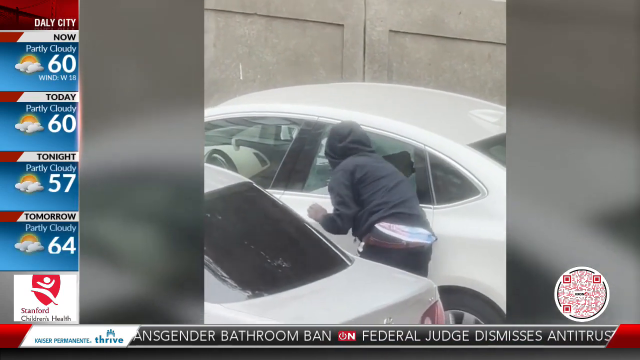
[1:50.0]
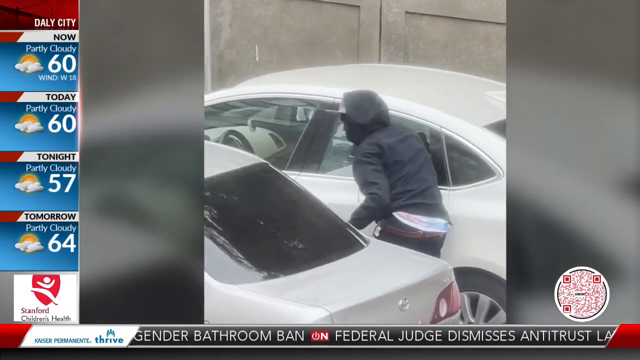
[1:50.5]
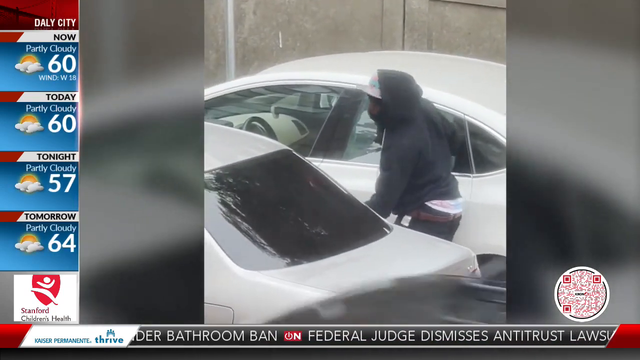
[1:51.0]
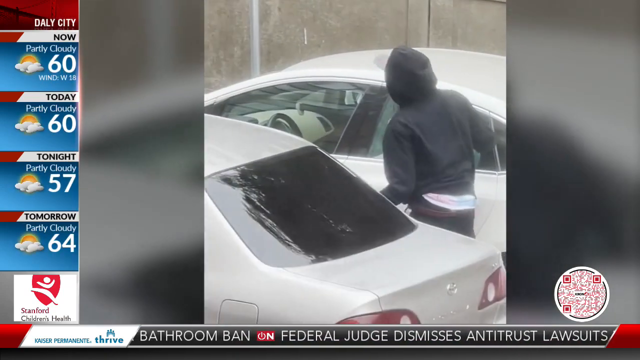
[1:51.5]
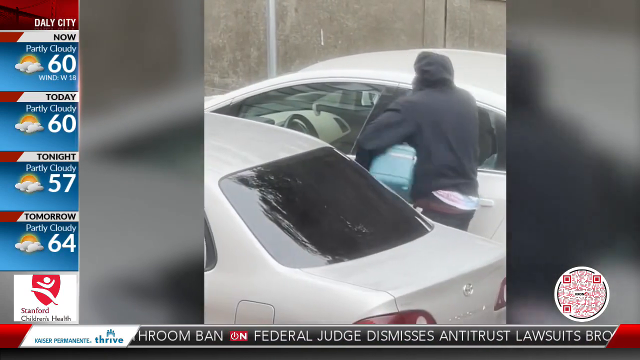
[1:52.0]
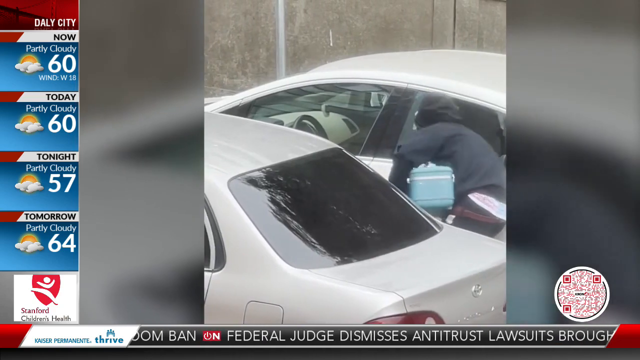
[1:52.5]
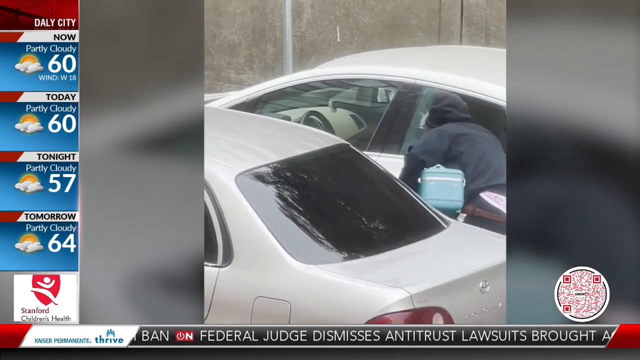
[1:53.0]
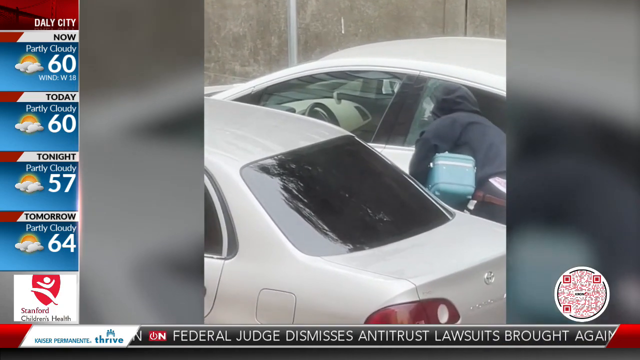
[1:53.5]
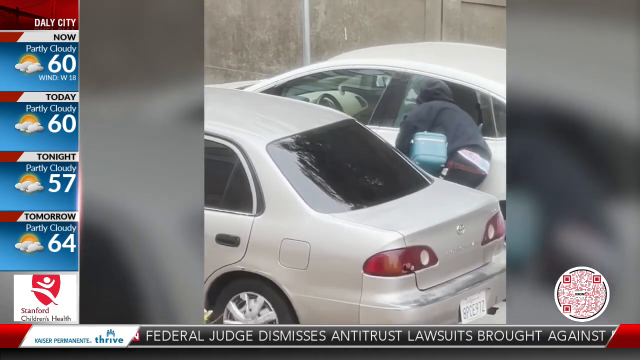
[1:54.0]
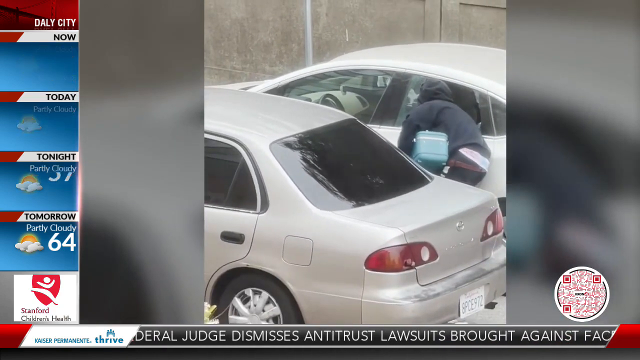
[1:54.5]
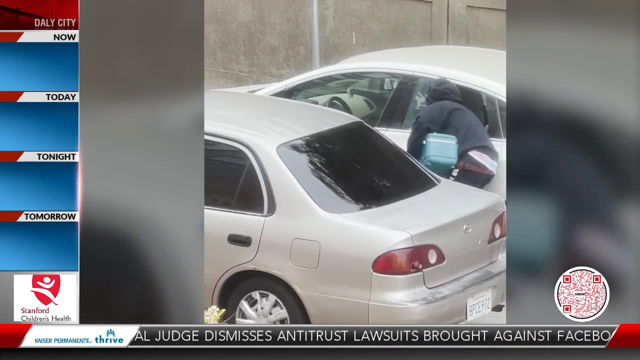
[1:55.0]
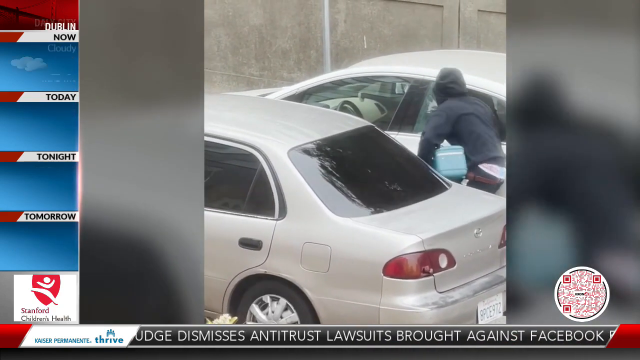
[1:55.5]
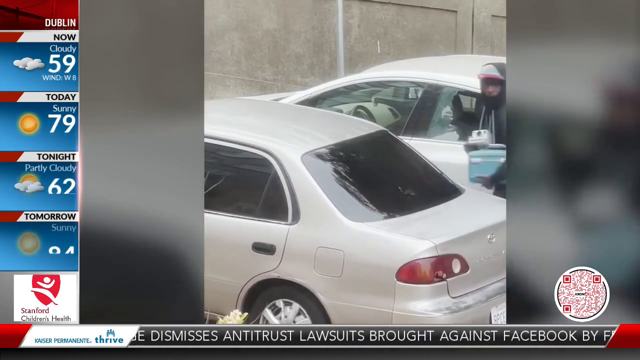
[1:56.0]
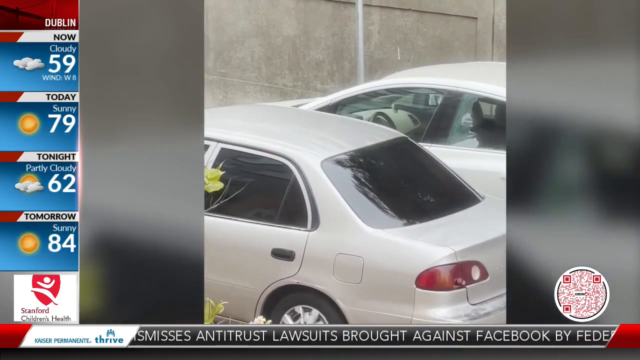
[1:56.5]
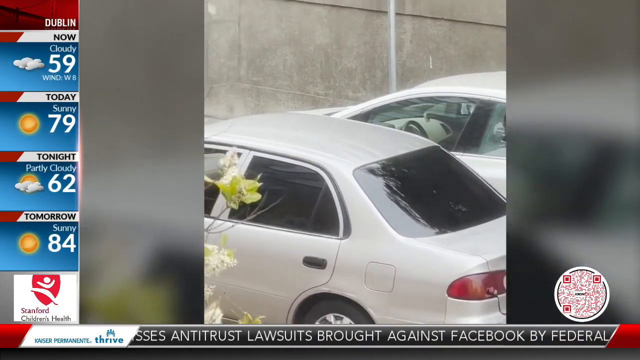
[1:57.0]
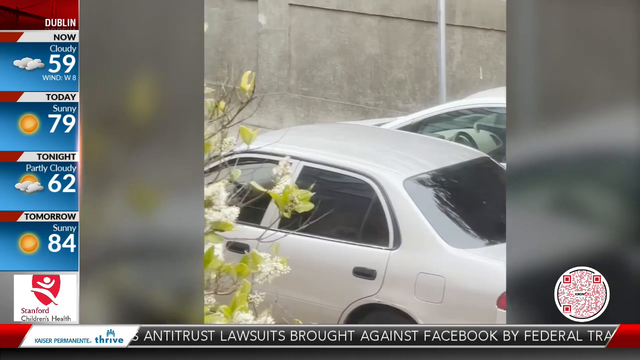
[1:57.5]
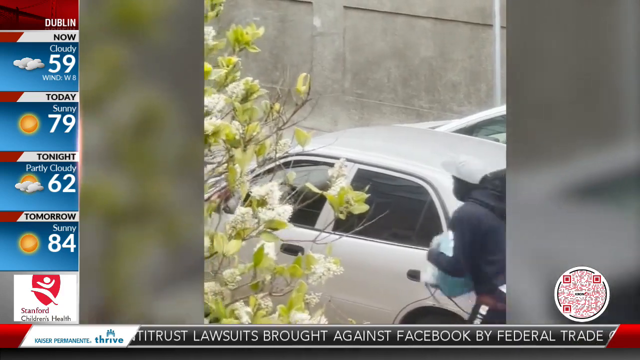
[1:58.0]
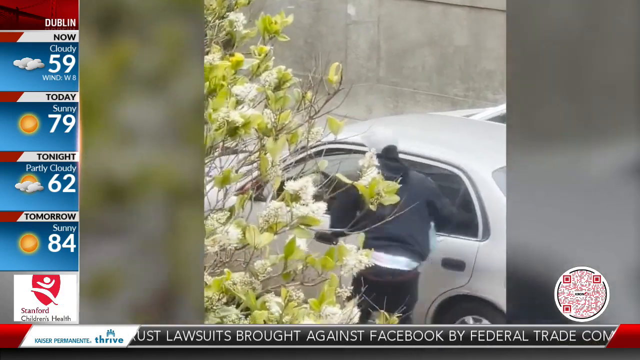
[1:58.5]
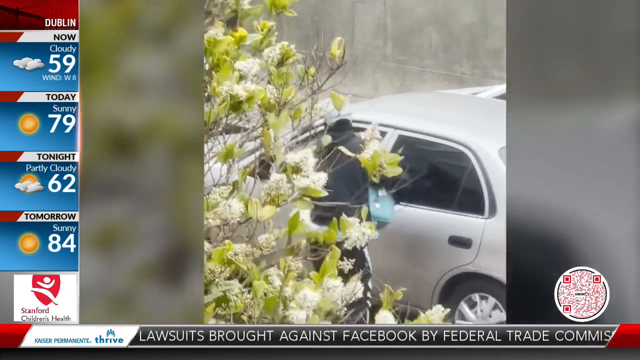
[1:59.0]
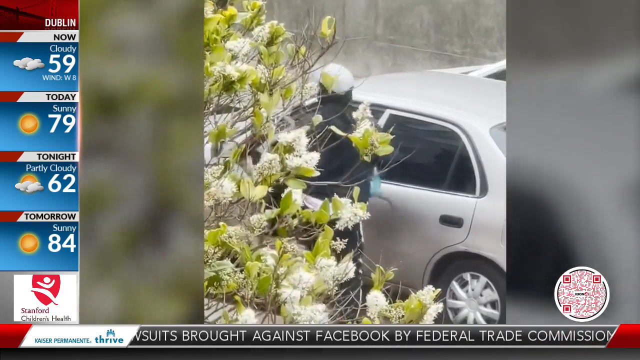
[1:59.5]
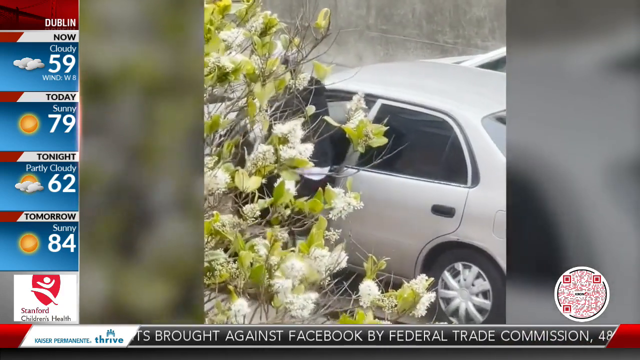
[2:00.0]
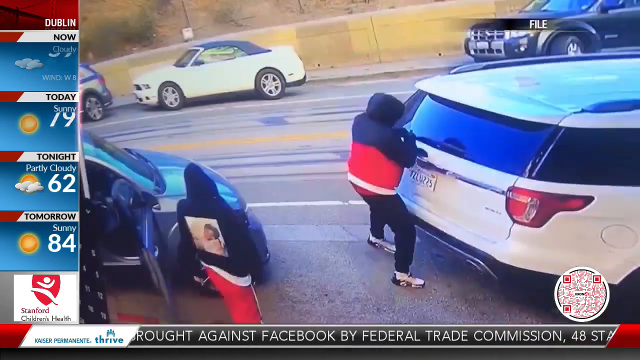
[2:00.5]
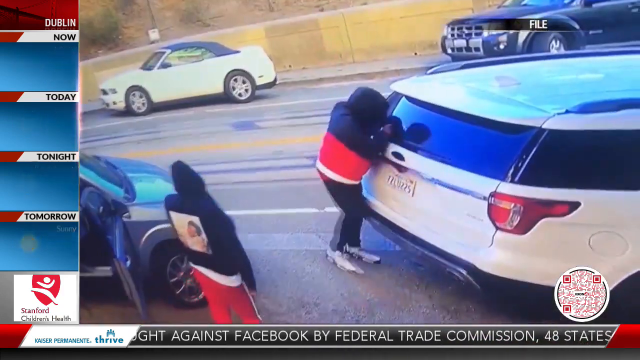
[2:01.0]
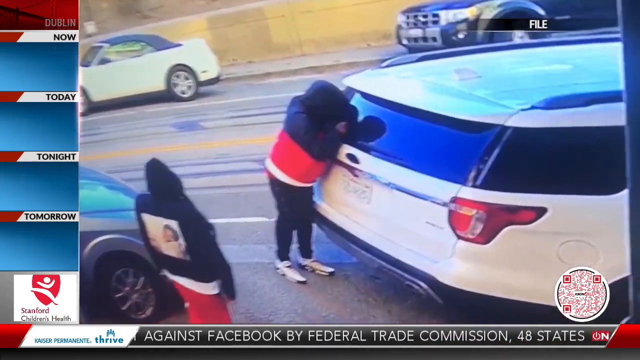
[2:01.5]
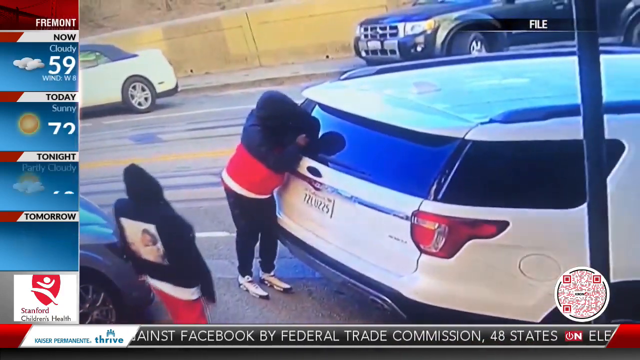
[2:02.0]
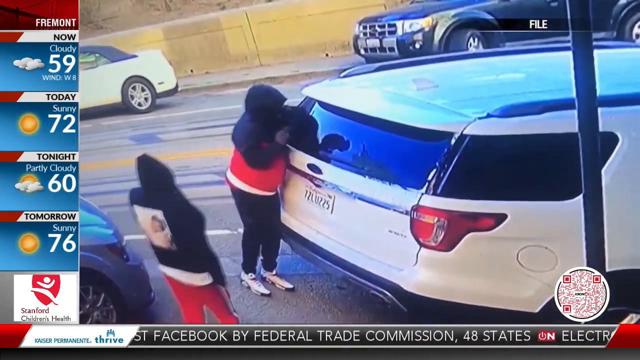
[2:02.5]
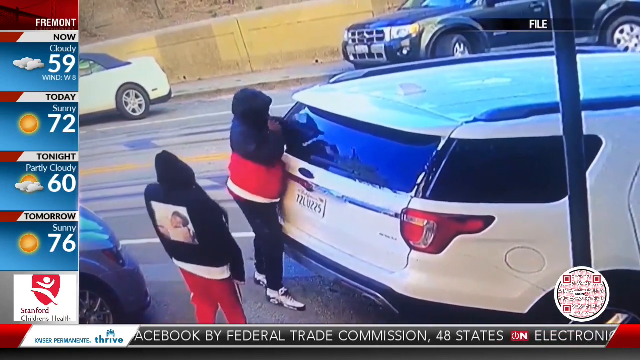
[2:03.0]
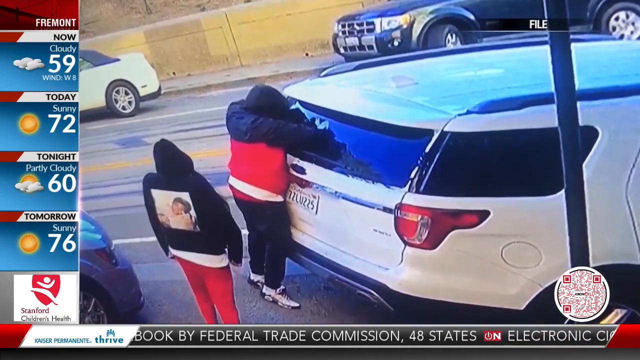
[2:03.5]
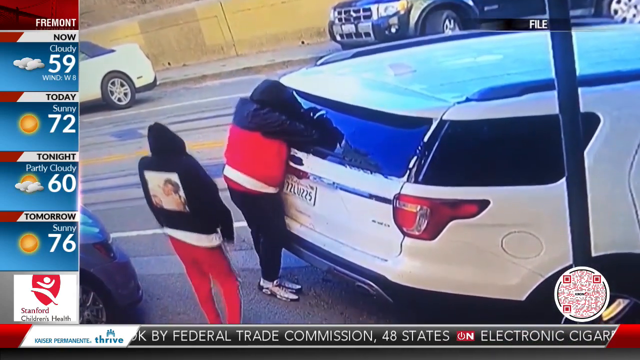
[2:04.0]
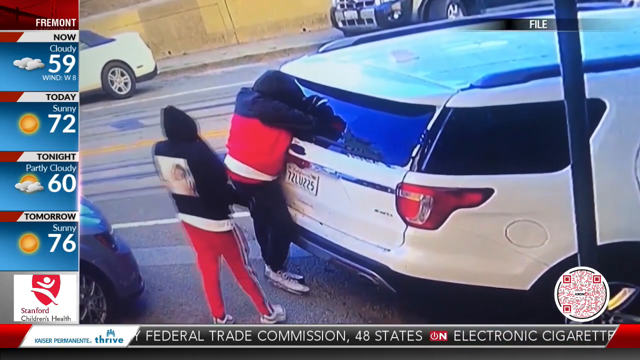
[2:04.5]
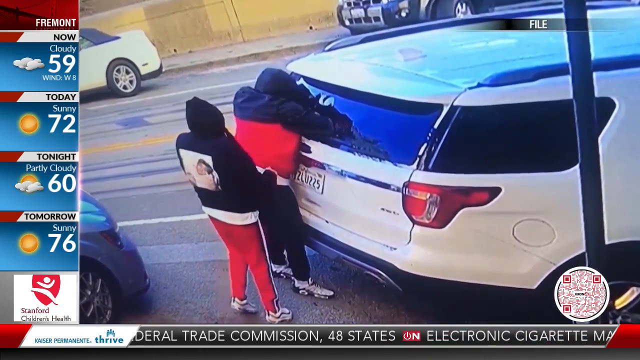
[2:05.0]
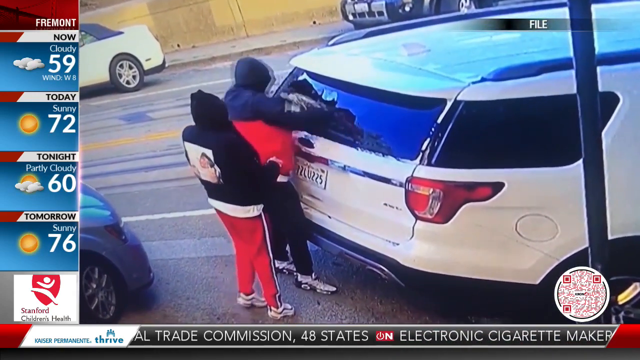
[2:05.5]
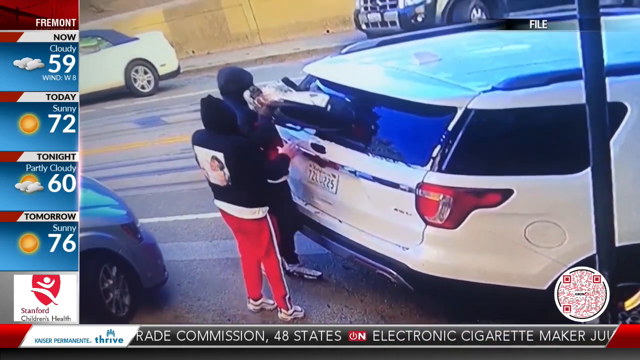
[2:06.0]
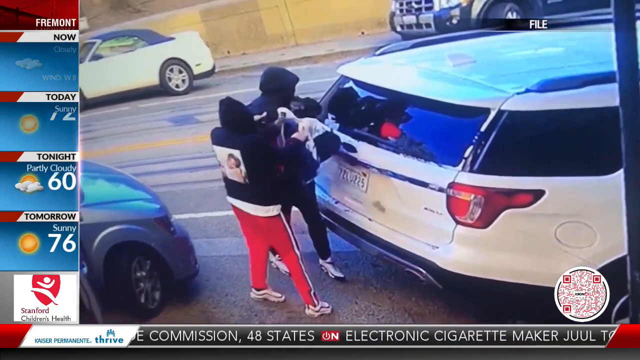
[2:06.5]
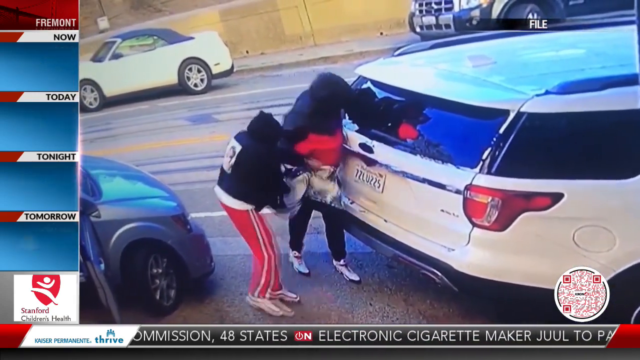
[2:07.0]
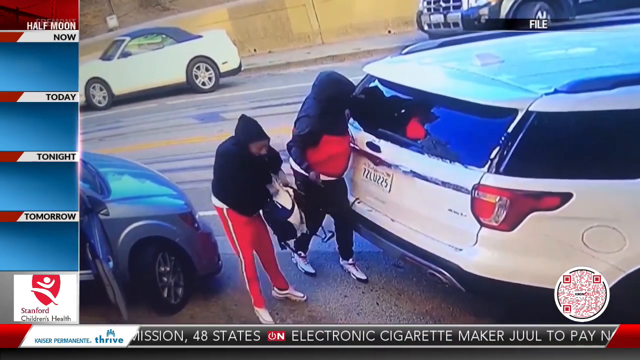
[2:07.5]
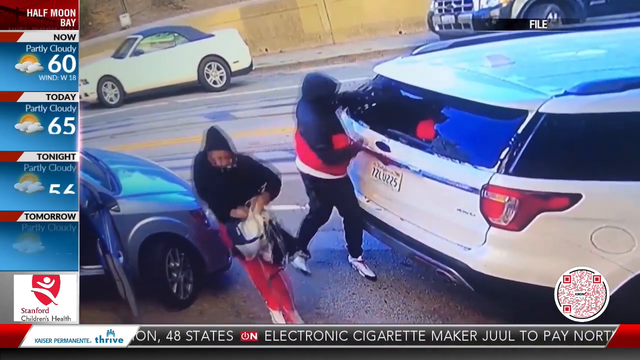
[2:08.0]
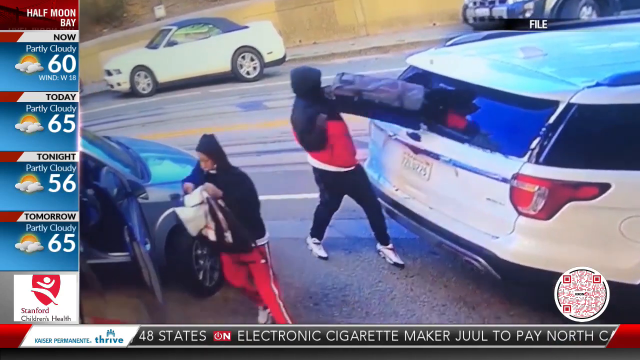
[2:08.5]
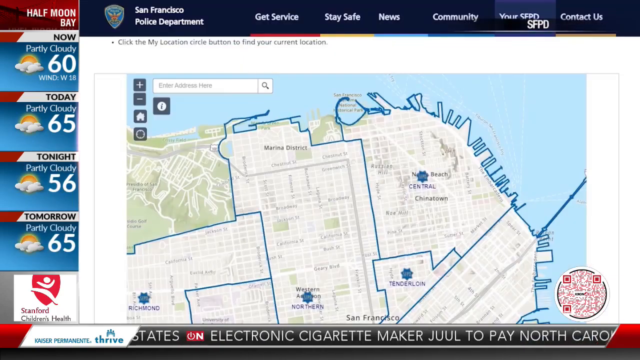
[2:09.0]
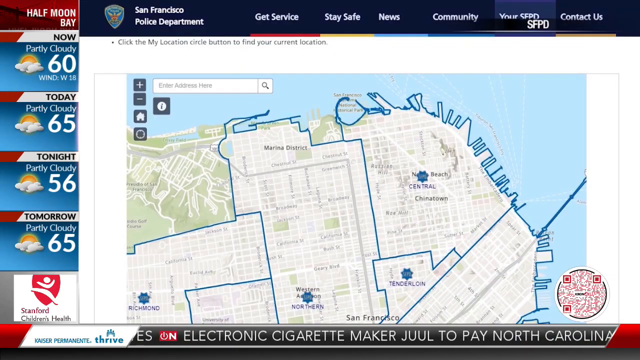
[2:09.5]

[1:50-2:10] The man who busted out the window carries a blue case. He goes to the other car, and it now appears to be the same person who stole the first car. He looks like he has a cooler in his hand. After stealing something from the first car, he goes over to the second car and gets in. The video then cuts to new footage, apparently a new story about people breaking into cars and stealing things. Two people are in this footage. A parked white car is visible, along with three other cars that appear to be parked. One person breaks the back window of the white car while someone else stands by helping. They pull a couple of different items out of the back of the car; the man hands them to the woman, and they start to walk away.